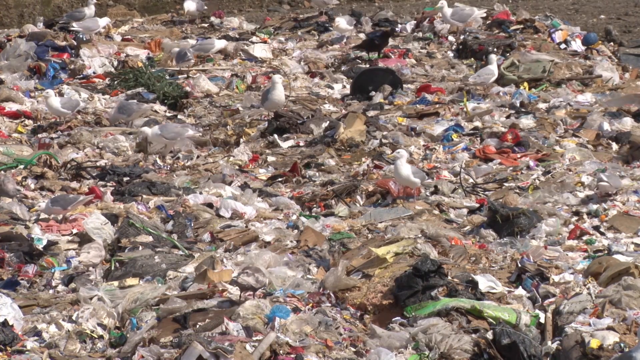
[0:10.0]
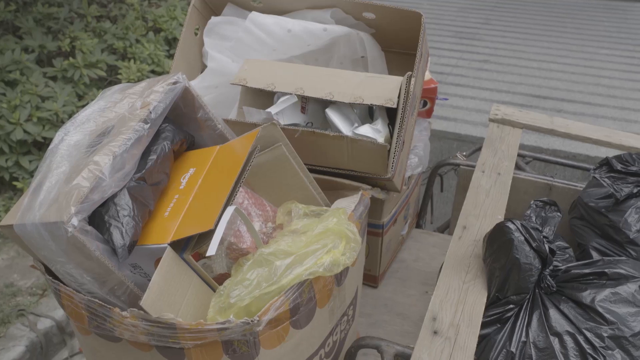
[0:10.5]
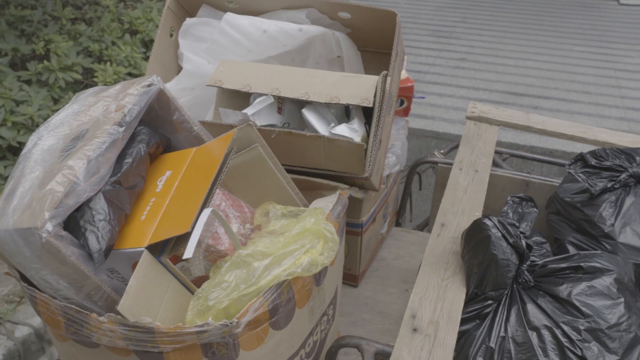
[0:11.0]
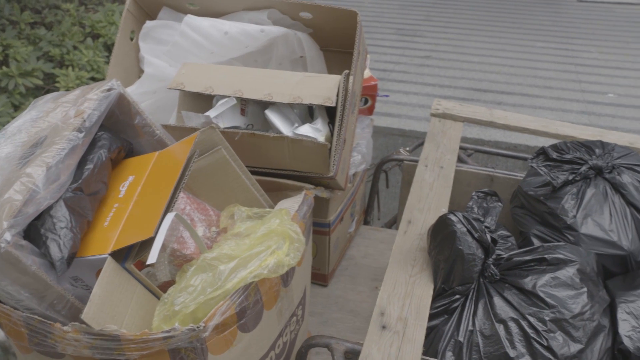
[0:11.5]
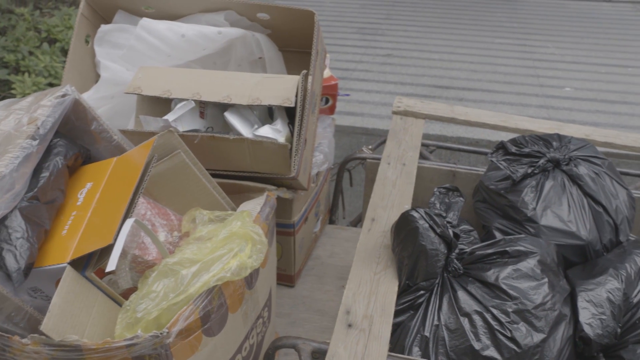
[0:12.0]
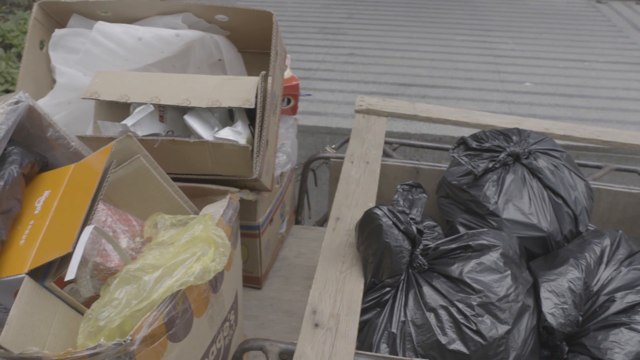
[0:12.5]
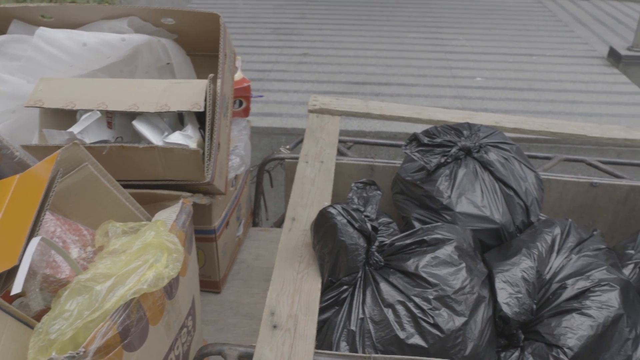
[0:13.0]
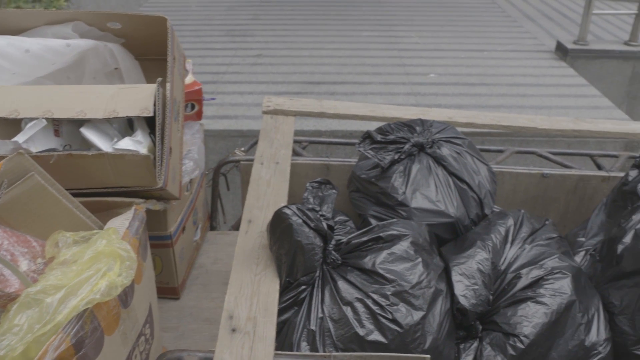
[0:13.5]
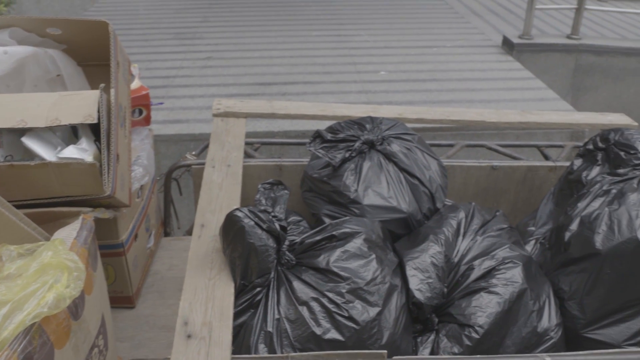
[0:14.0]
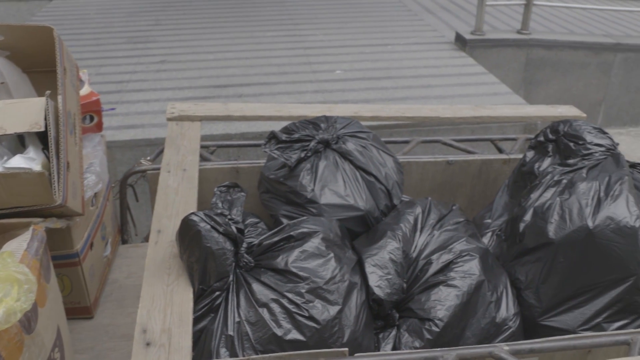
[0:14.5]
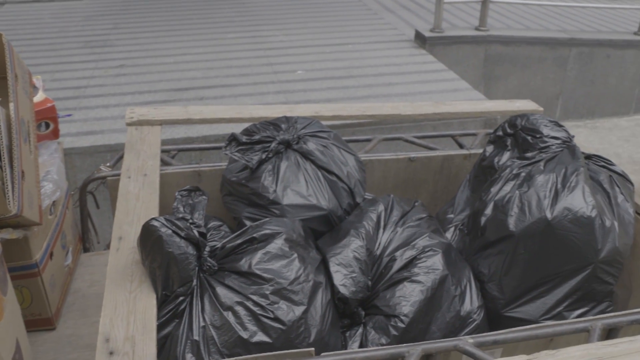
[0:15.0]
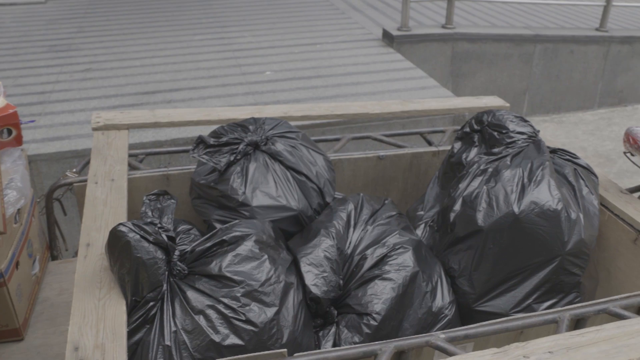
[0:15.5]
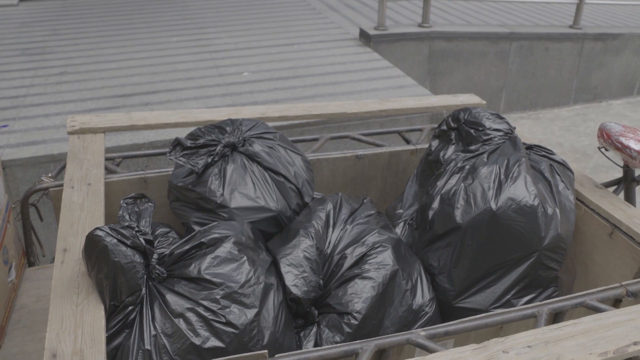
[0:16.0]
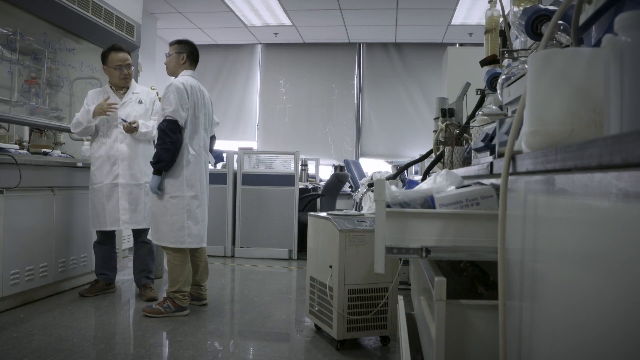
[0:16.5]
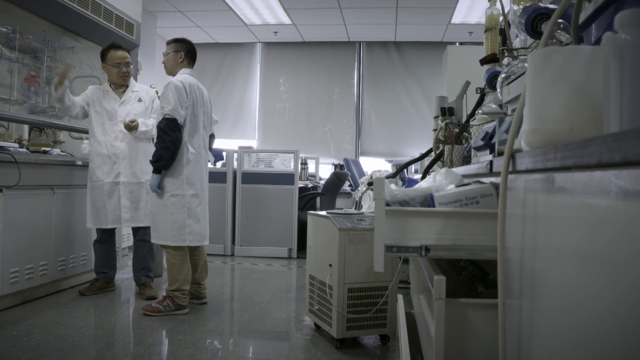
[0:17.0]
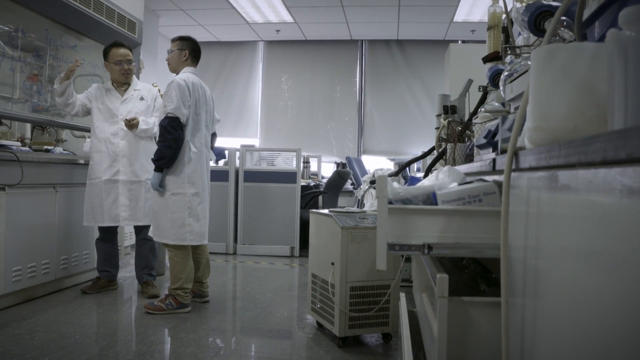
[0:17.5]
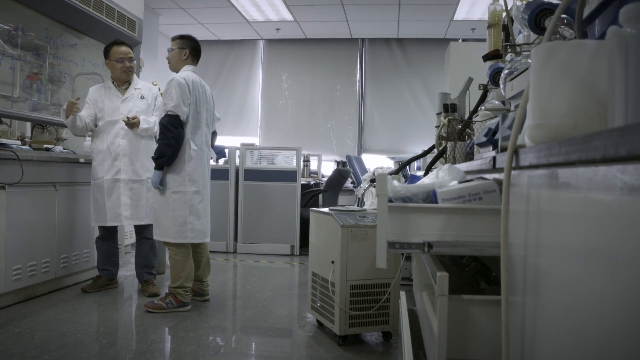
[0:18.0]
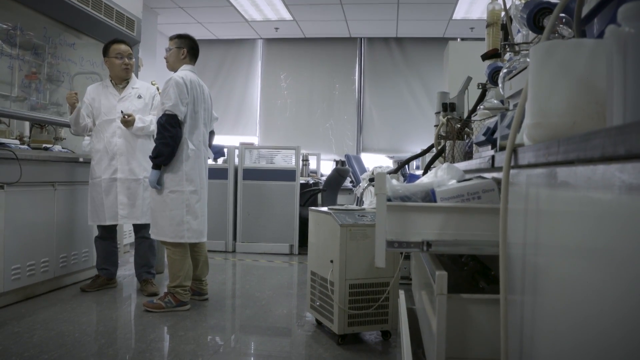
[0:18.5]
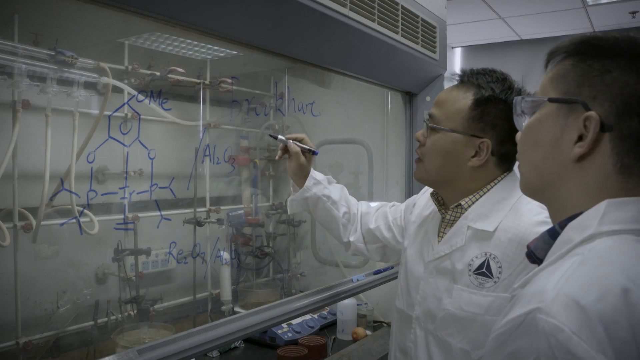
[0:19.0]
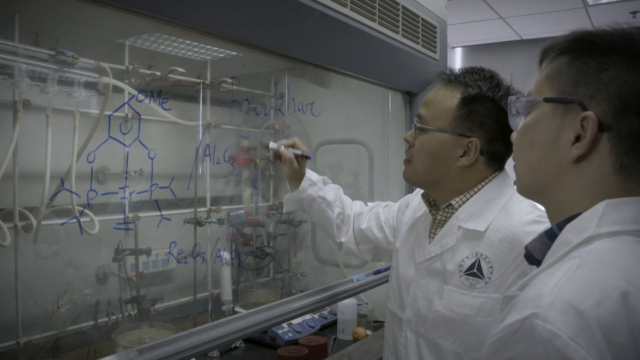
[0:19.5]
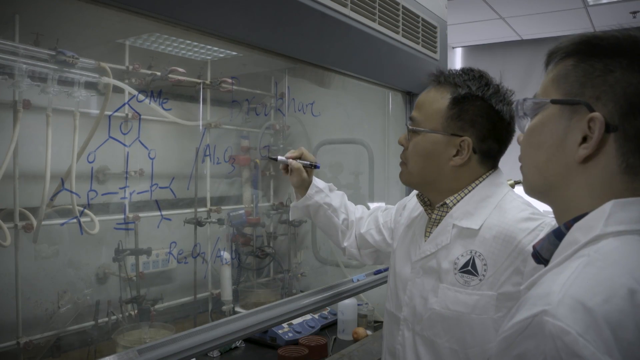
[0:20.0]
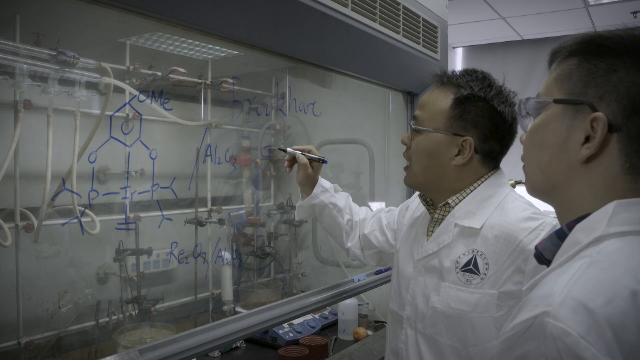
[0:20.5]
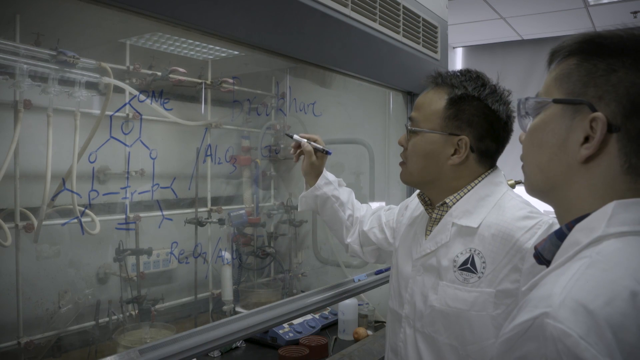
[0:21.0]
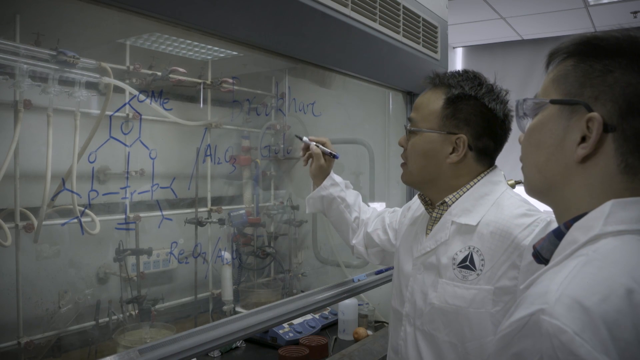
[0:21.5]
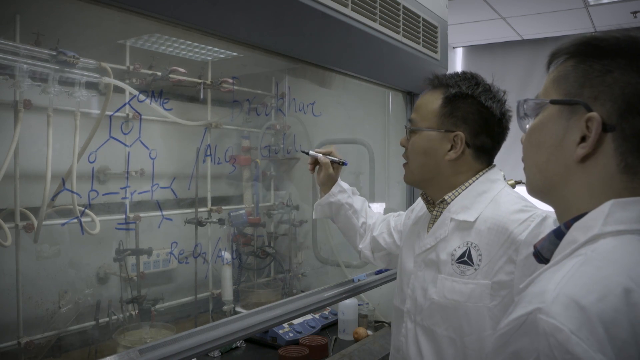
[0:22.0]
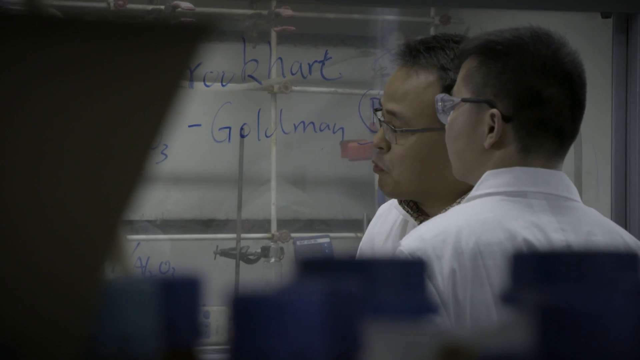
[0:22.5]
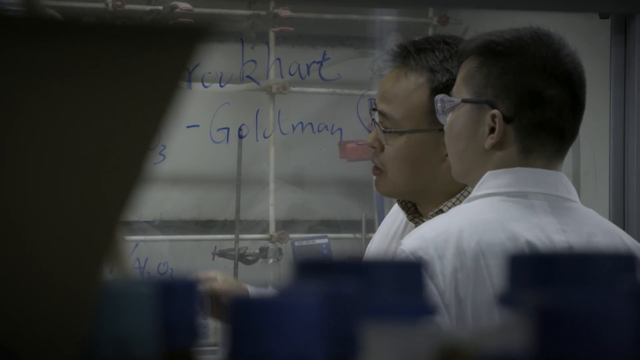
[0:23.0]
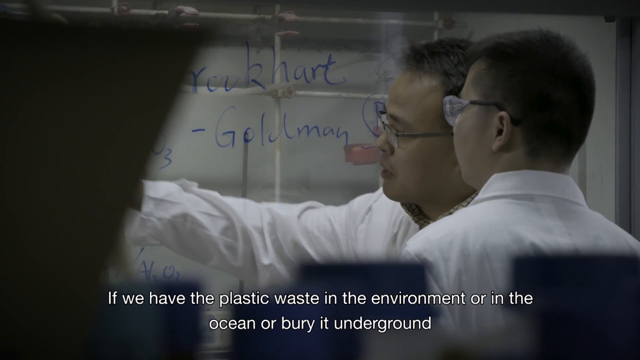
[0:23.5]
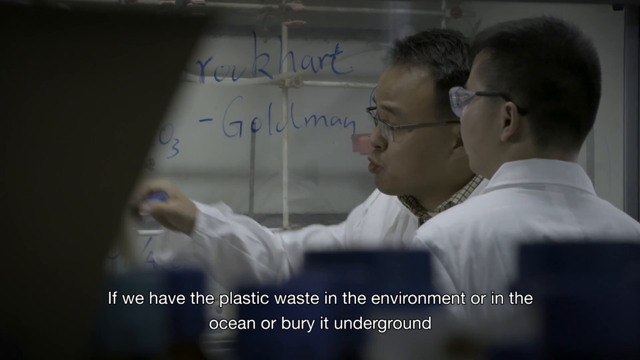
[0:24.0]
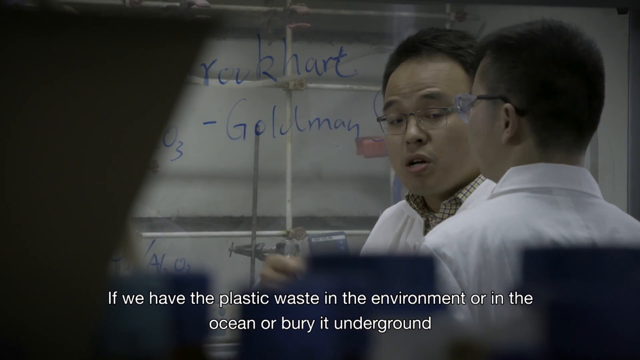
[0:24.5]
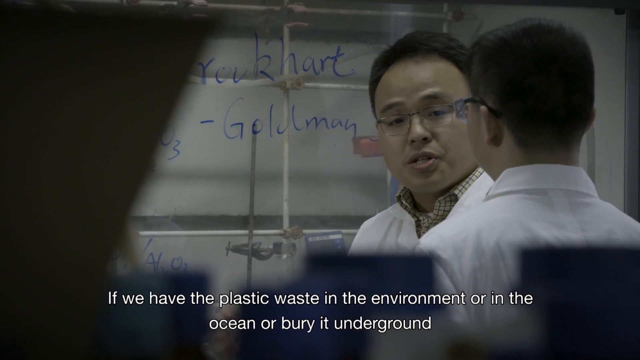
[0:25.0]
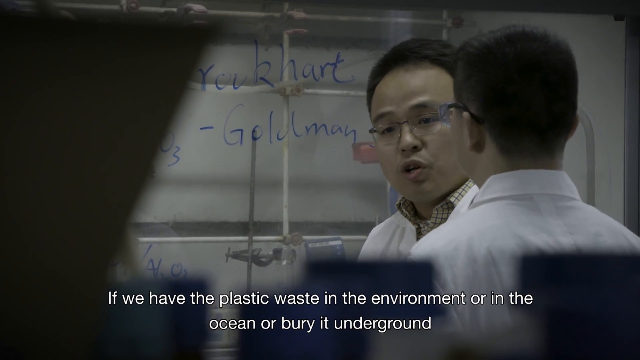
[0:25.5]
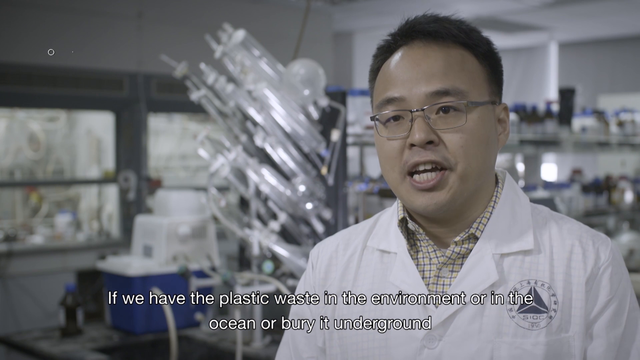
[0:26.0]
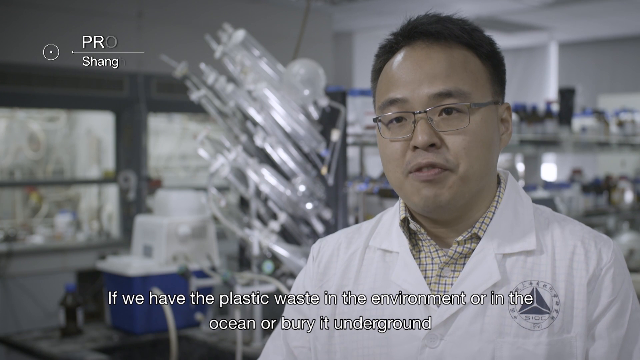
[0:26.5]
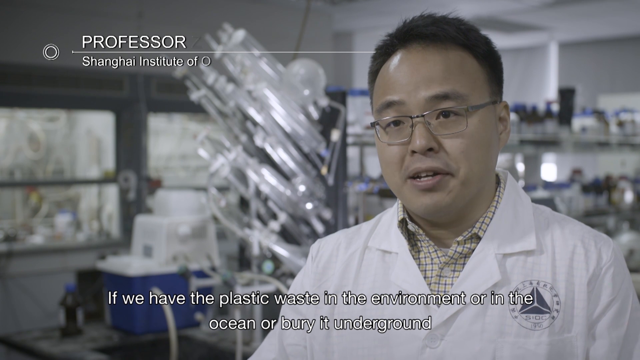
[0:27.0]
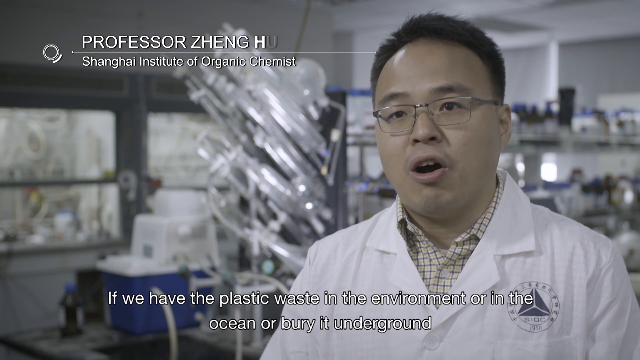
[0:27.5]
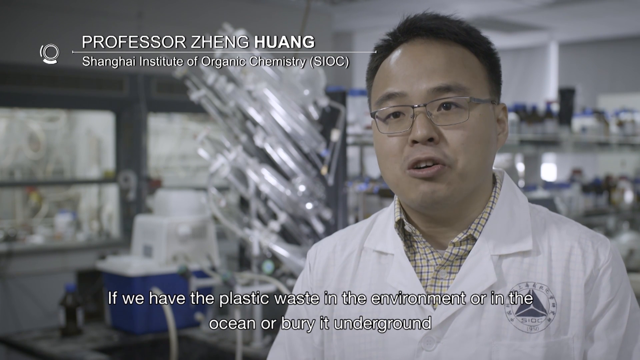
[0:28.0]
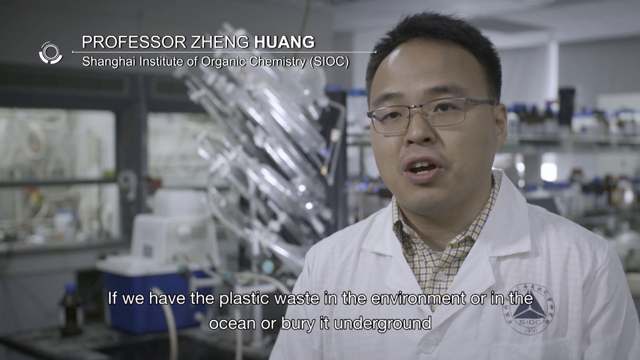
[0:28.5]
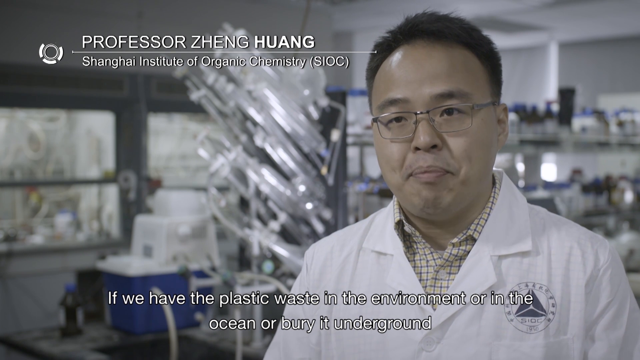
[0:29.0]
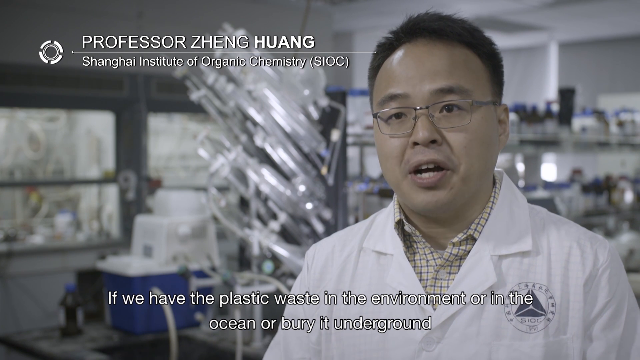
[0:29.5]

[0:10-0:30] Land with trash covering its whole surface appears, with white birds with gray wings walking around pecking at the trash. A close-up shows more piles of trash, including boxes with empty bags in them and piles of black garbage bags. The scene then moves to what looks like the inside of some type of laboratory, a mostly white room, where two Chinese scientists stand next to each other having a conversation. A closer view shows one scientist writing out some type of scientific formula on a glass board as the other looks on. A close-up then shows a scientist speaking to the camera. Text at the top left of the screen reads "Professor Zheng Huang," and underneath it "Shanghai Institute of Organic Chemistry, SIOC." As he speaks, a caption at the bottom reads "if we have plastic waste in the environment or in the ocean or bury it underground."